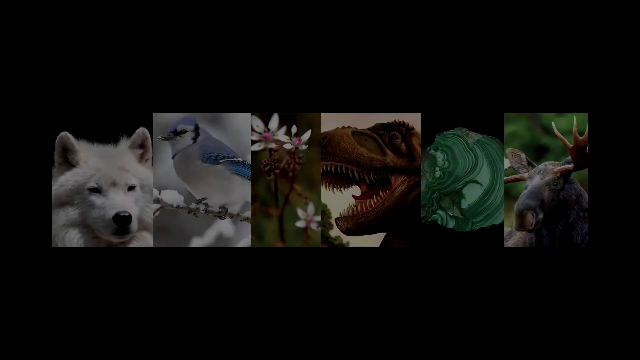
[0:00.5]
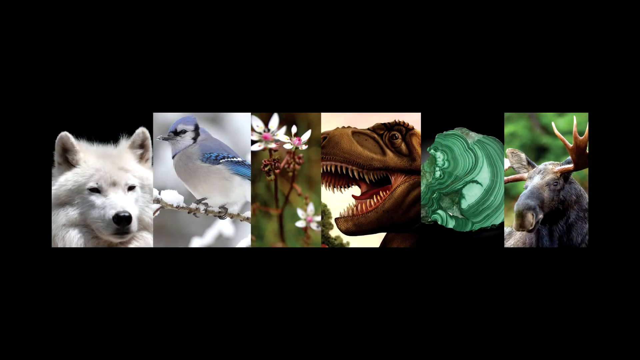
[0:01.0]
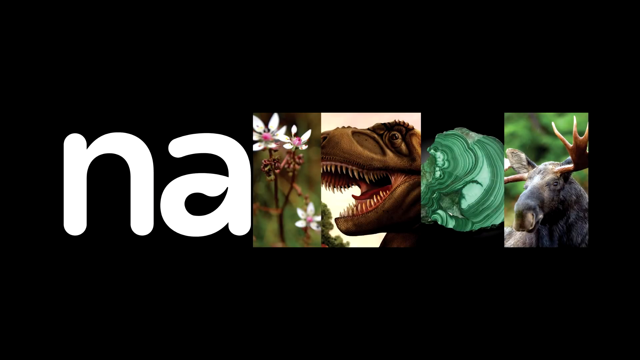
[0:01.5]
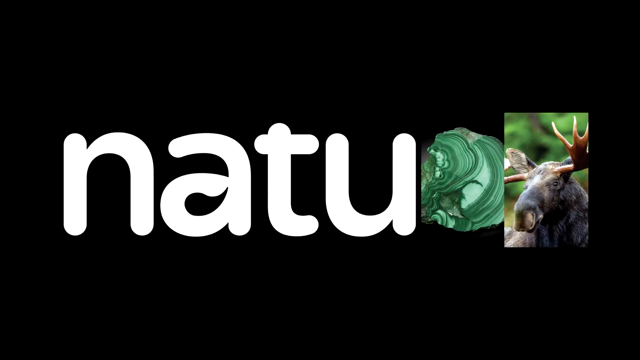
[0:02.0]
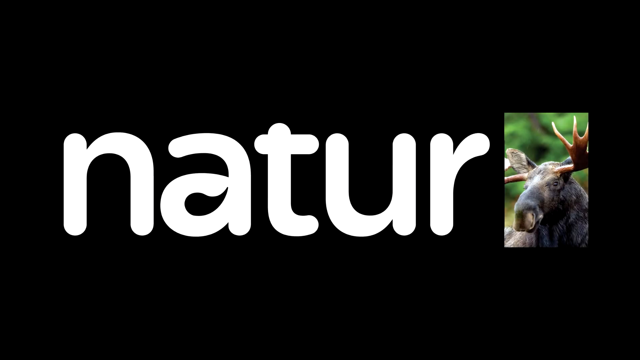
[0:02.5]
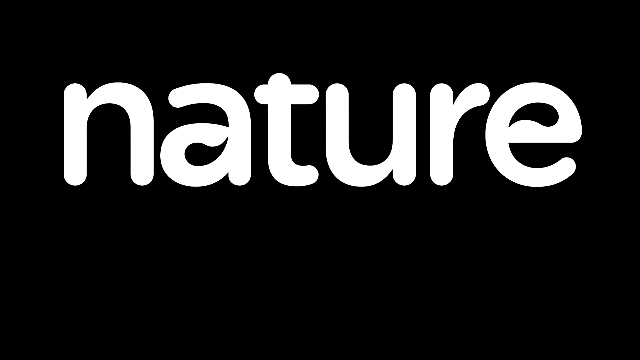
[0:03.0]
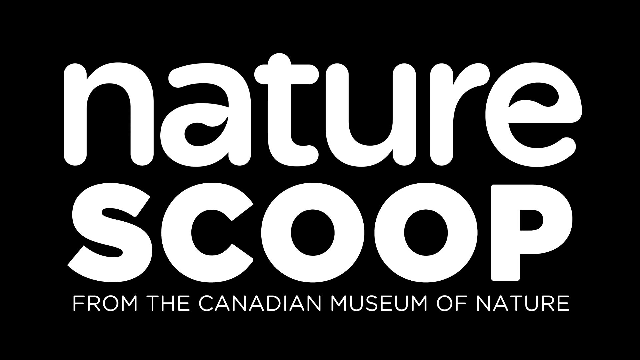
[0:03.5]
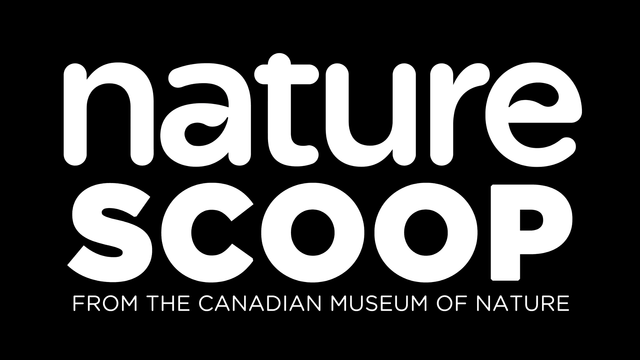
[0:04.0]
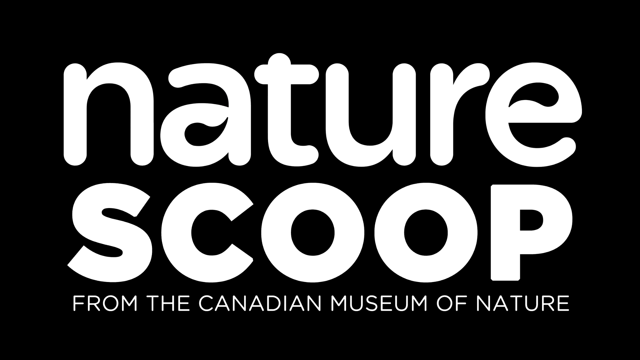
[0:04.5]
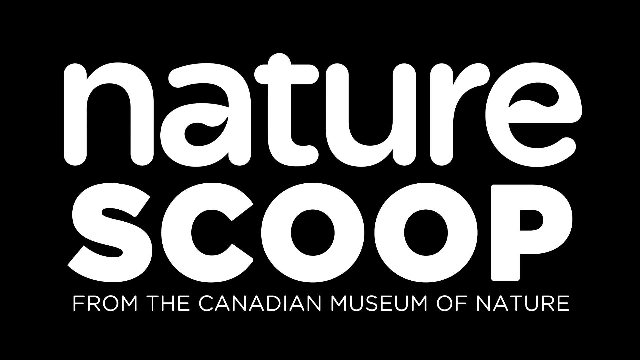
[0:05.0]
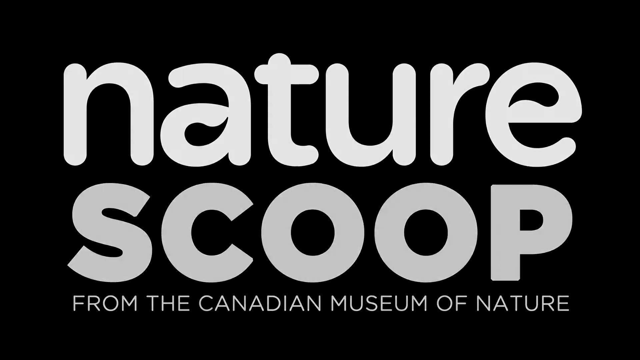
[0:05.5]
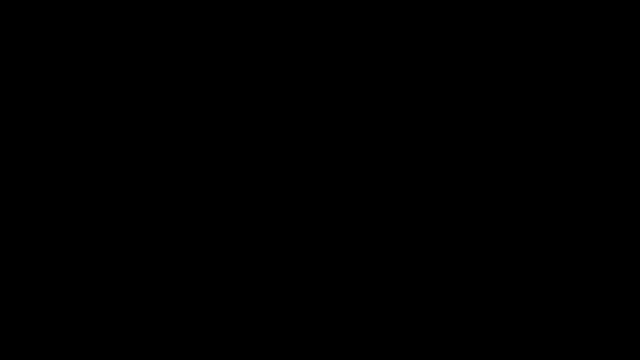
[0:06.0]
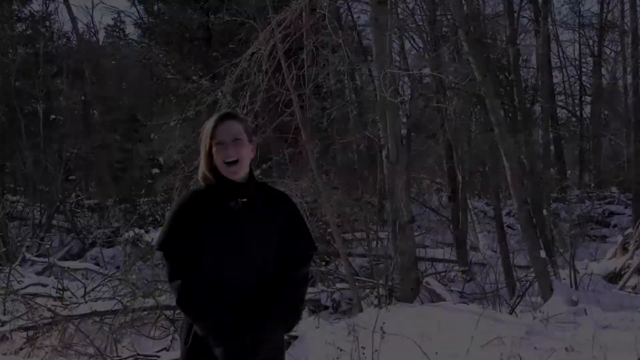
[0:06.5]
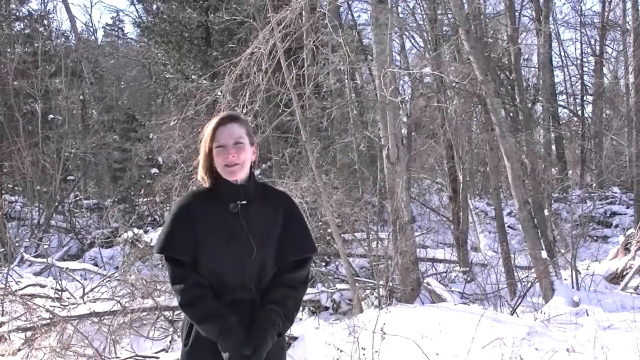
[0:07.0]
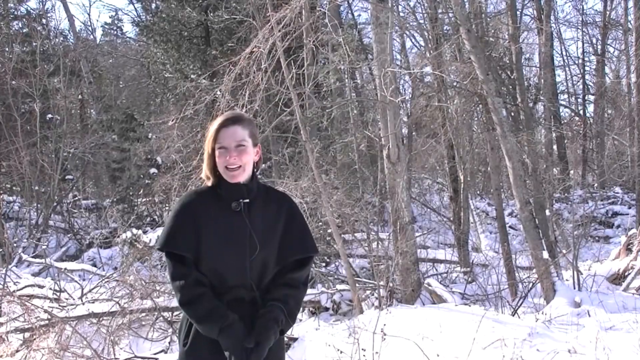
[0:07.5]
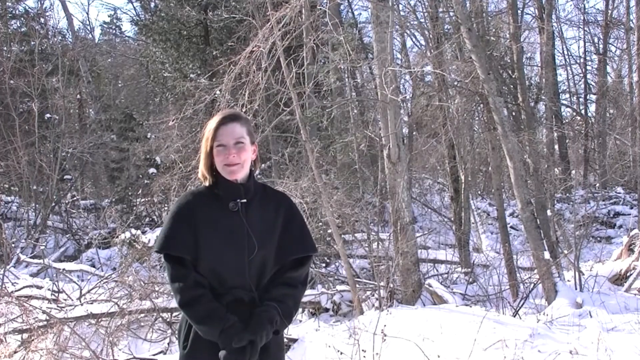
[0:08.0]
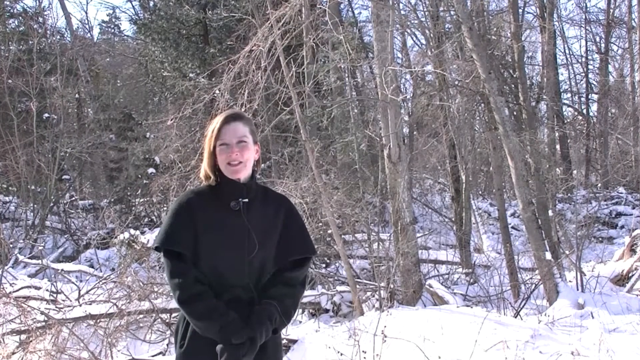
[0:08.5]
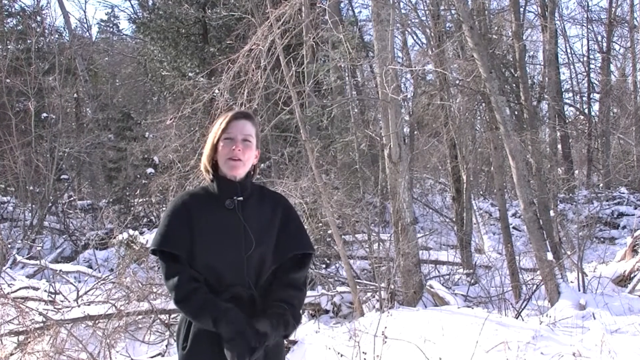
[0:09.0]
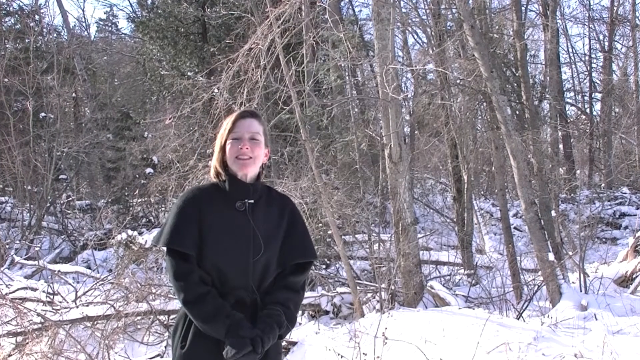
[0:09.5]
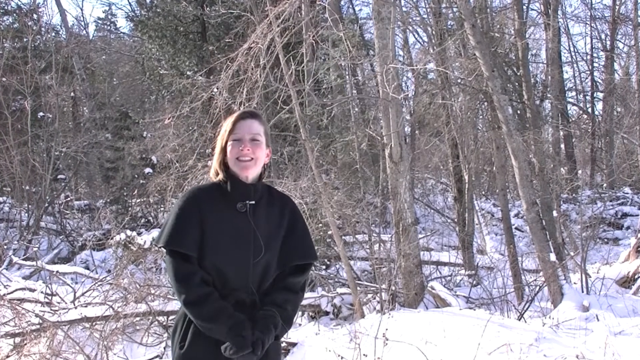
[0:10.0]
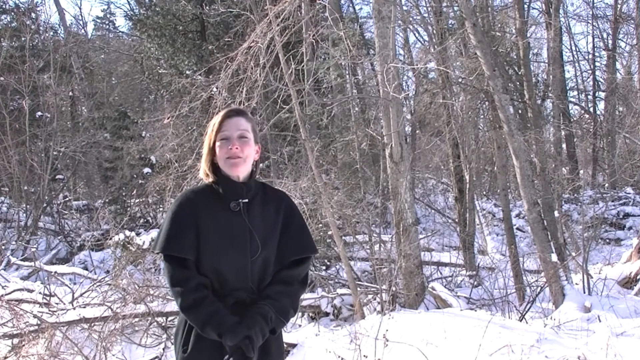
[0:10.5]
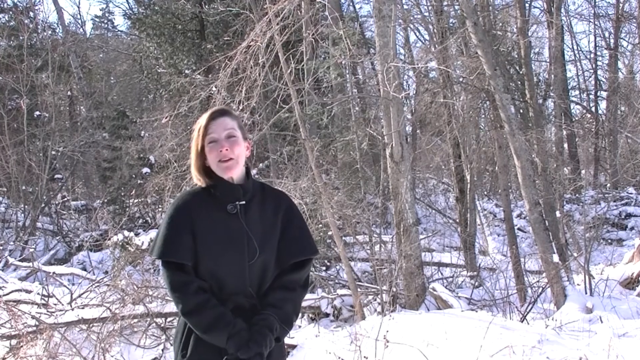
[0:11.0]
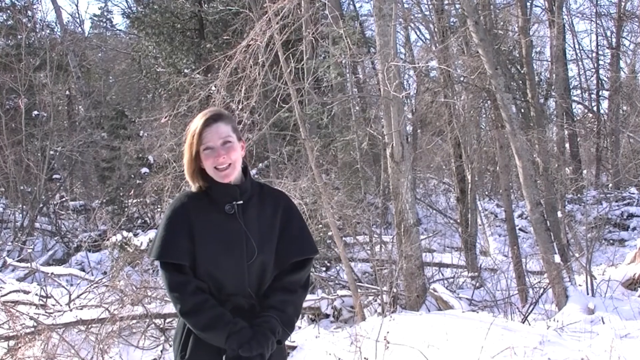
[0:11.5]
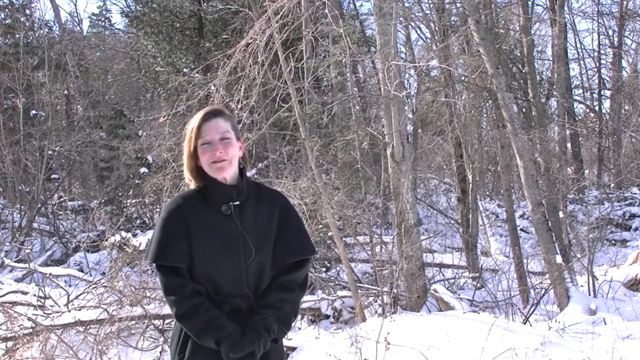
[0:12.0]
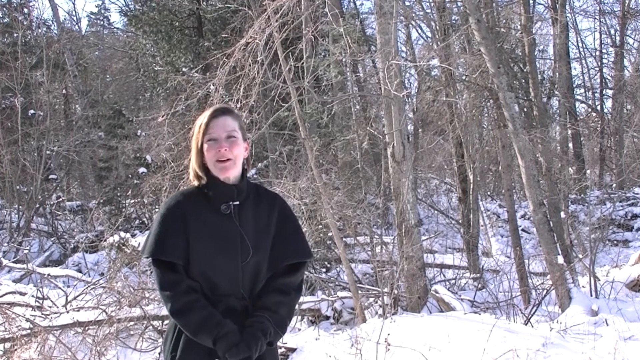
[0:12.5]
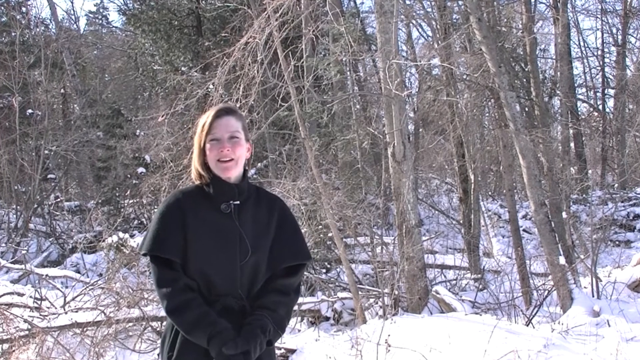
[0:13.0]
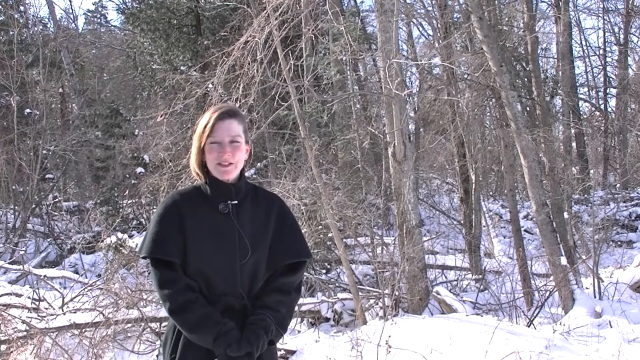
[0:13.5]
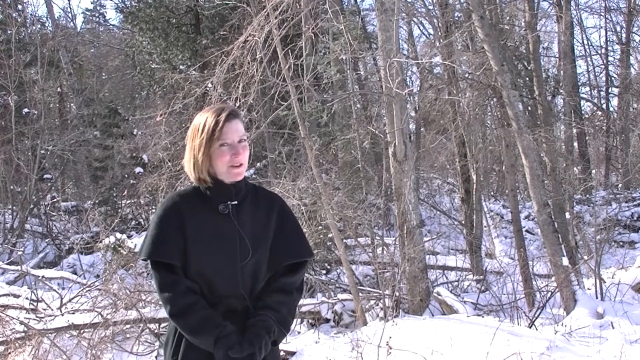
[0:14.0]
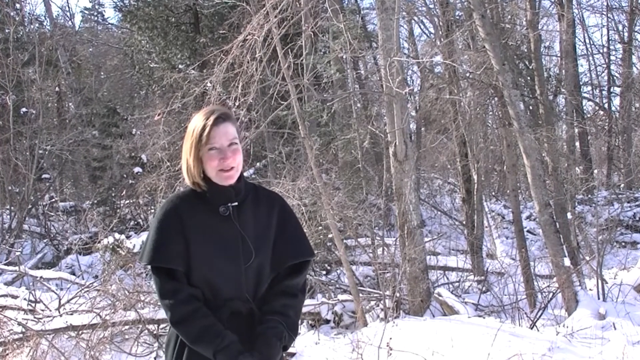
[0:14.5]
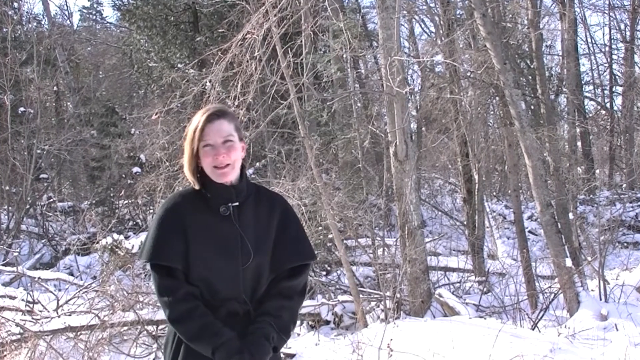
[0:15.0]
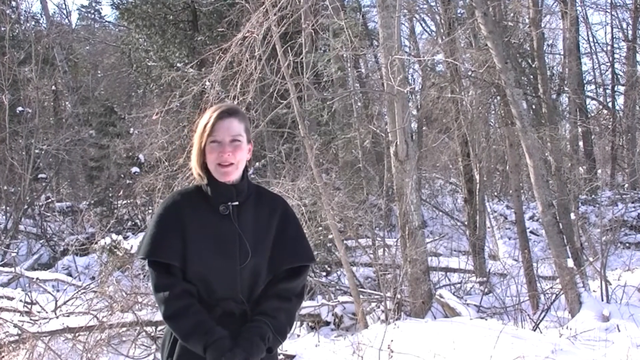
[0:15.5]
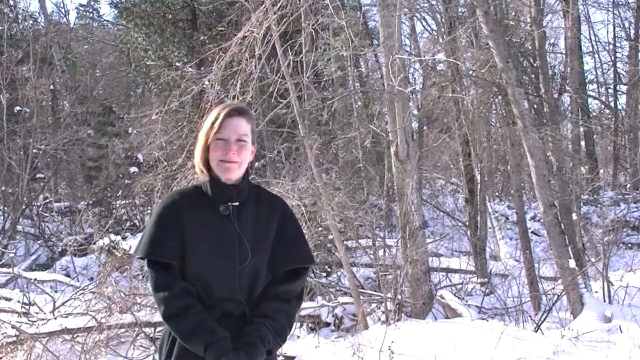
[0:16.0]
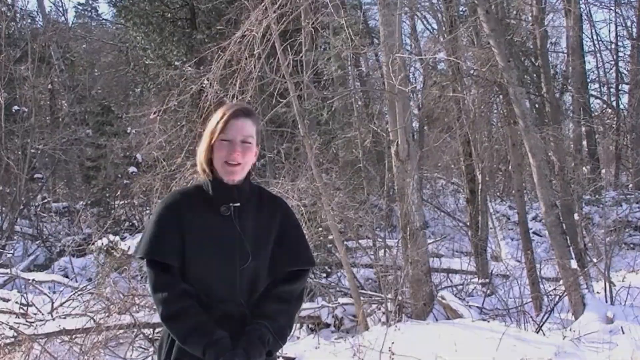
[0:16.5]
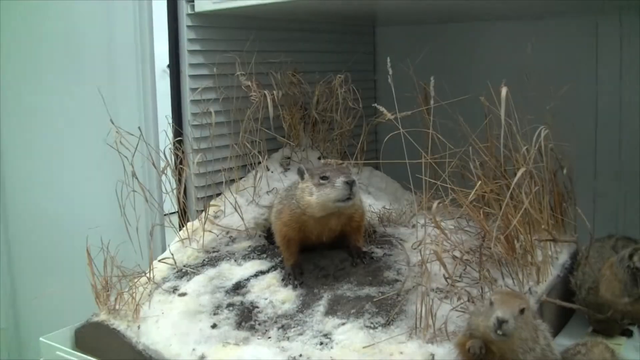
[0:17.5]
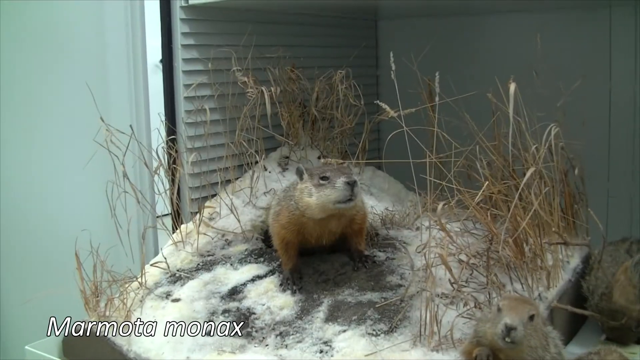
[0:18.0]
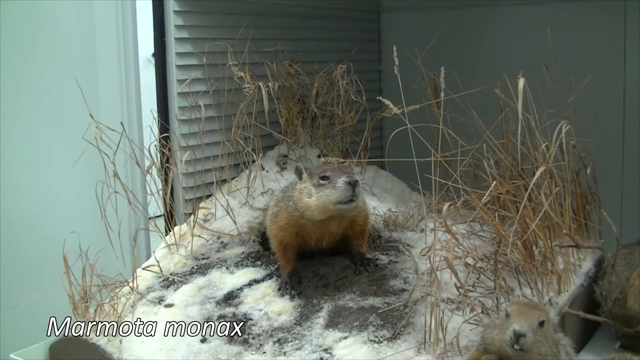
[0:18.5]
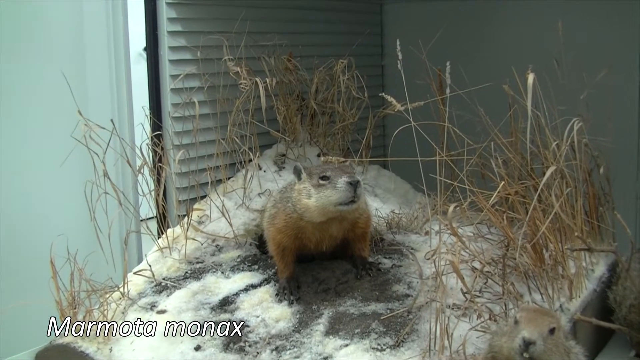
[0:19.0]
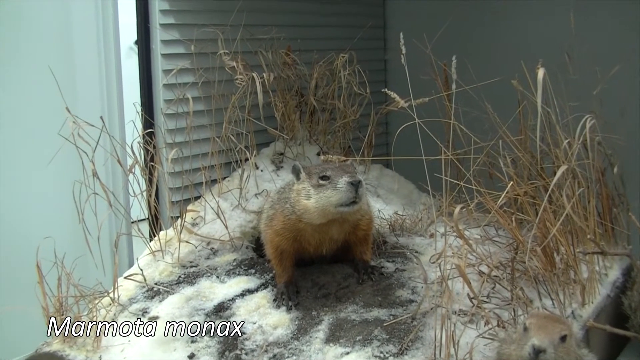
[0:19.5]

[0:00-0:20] The video opens on a black background with six individual rectangles, taller than they are wide, each containing a different subject: a white wolf, a blue jay in winter, a flower with white petals, a dinosaur, a green swirl of some kind, and a moose in the last one. The animals change into the word "nature" in all-lowercase white letters, still on the black background. The word "nature" moves up and the word "scoop" comes in underneath it, and "from the Canadian Museum of Nature" appears at the very bottom of the screen in all uppercase; "scoop" is possibly uppercase as well. A young woman then stands slightly left of center. She wears a black cape-style coat with a clasp at the top over a long, dark black jacket, and her hair is a lightish brown. She faces slightly to the left. Behind her the scene is heavily wooded with leafless trees, dormant for the winter, their branches hanging down. She stands in front of a small stream, with pine or evergreen trees in the distance behind her. Her hands are clasped in front of her and she smiles somewhat at the camera. She begins talking, moving her clasped hands slightly back and forth while her head moves from side to side, bobbing slightly as she speaks. Her smile widens and her head turns more noticeably left and right. The scene fades to a small woodland creature, possibly a gopher or a woodchuck, coming out of a burrow surrounded by dead grass that is maybe six to eight inches tall. The light brown creature is seated in the middle of the hole, and an enclosure with a grate or ventilating system surrounds it, open at the front.